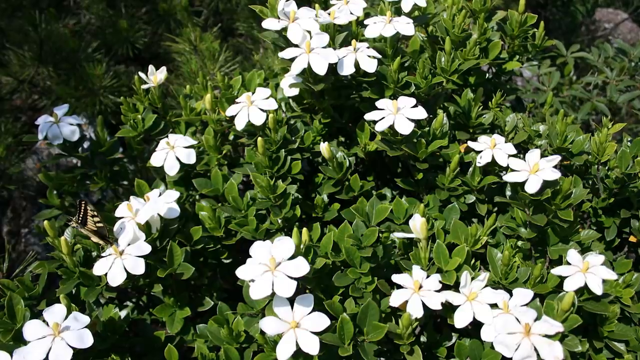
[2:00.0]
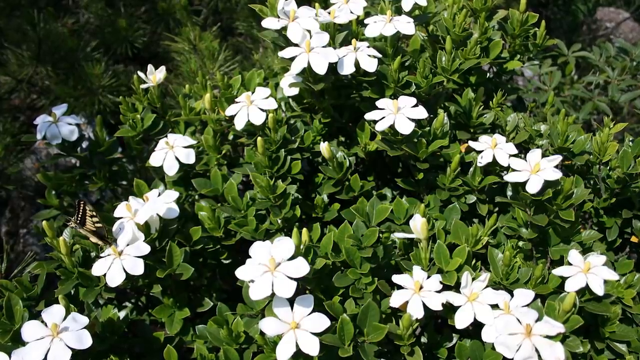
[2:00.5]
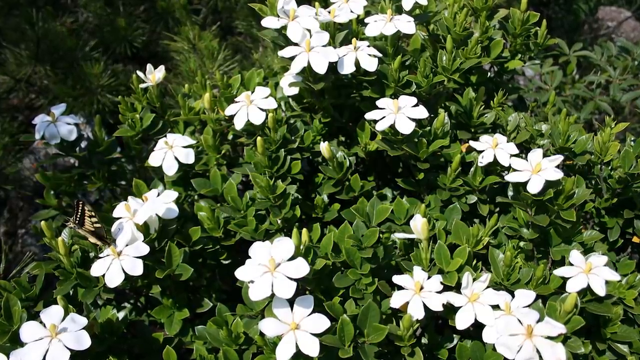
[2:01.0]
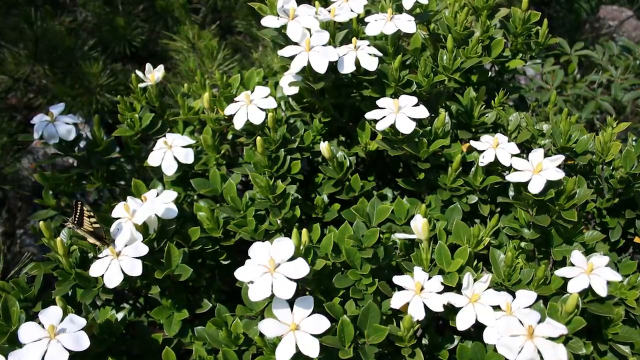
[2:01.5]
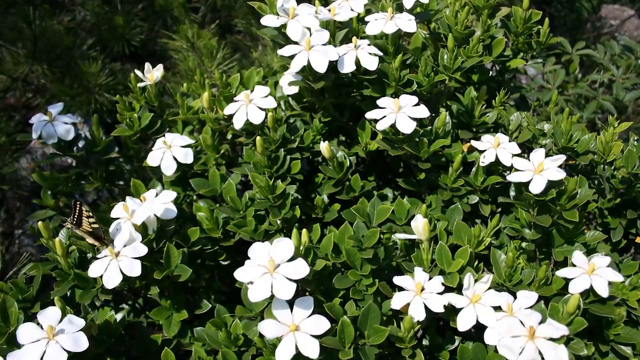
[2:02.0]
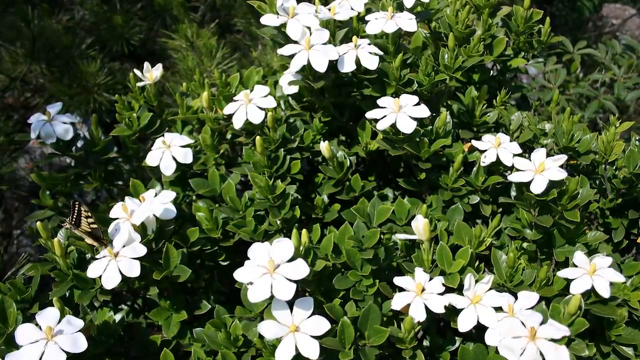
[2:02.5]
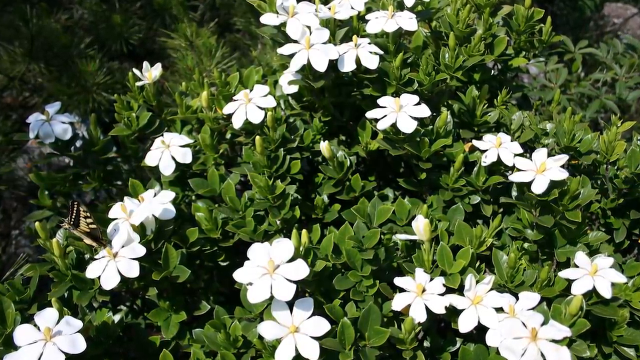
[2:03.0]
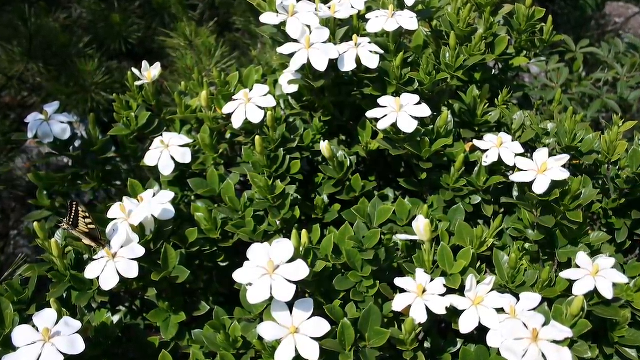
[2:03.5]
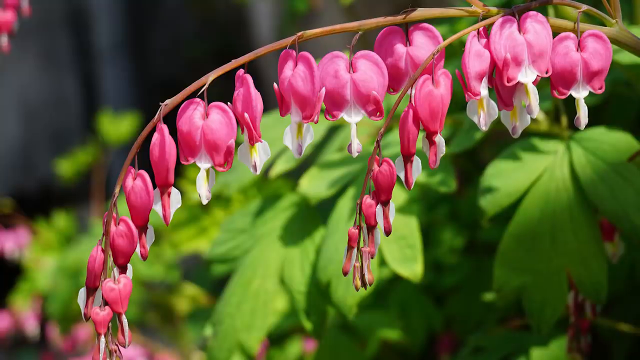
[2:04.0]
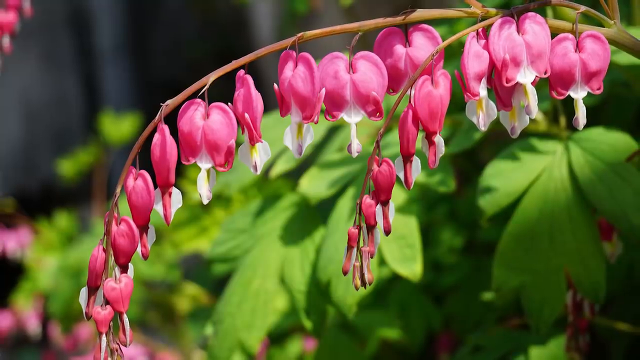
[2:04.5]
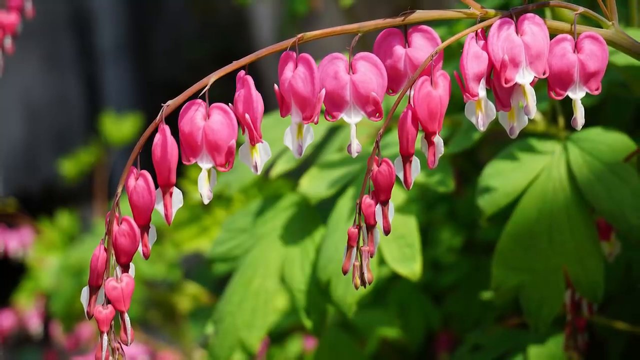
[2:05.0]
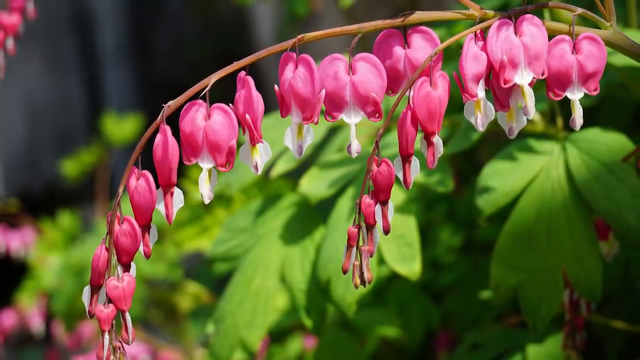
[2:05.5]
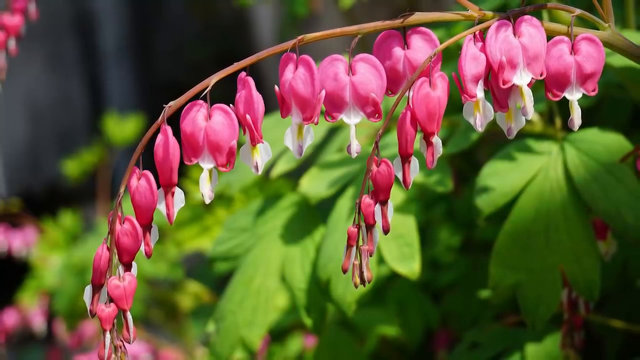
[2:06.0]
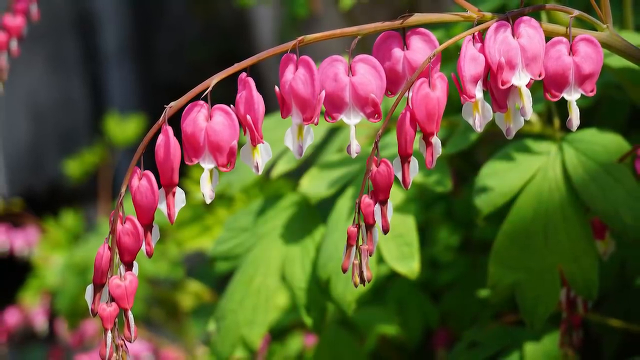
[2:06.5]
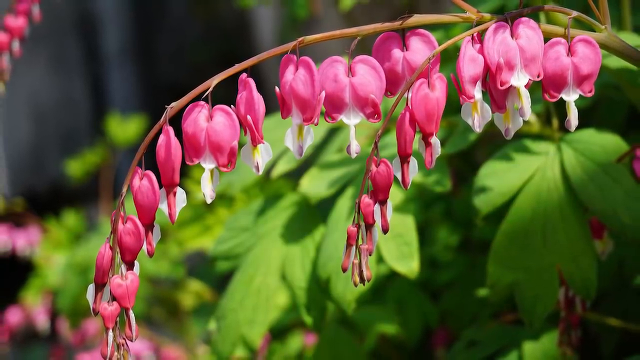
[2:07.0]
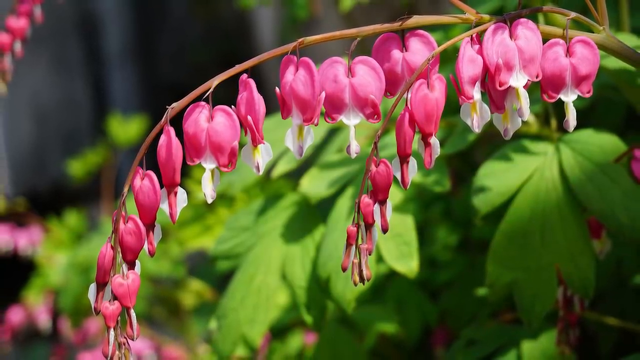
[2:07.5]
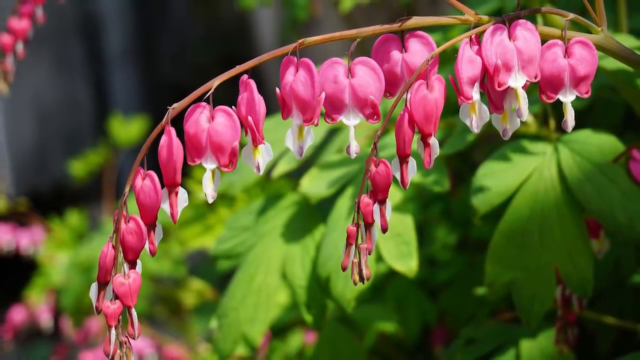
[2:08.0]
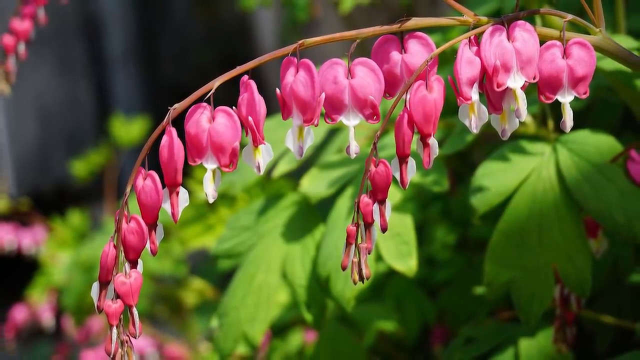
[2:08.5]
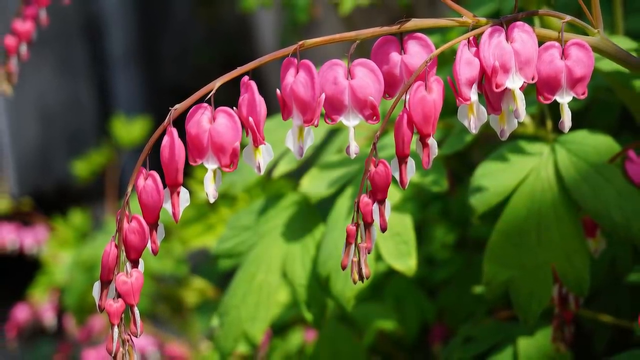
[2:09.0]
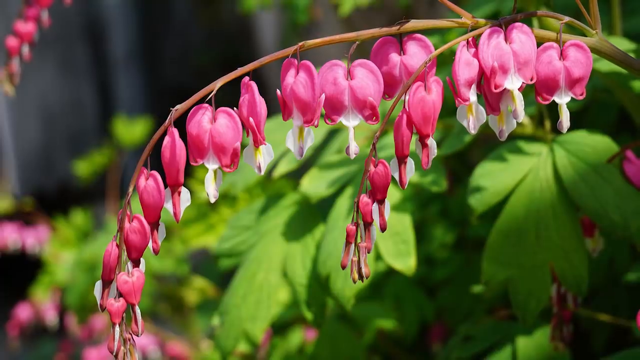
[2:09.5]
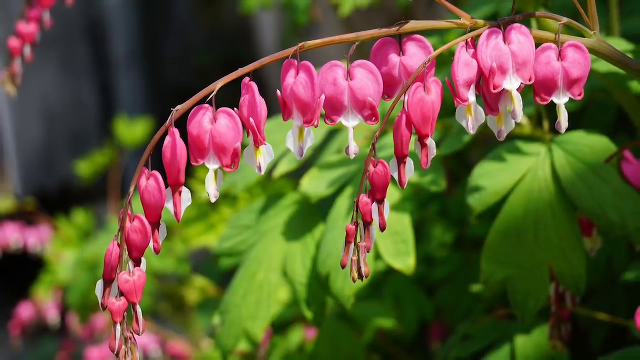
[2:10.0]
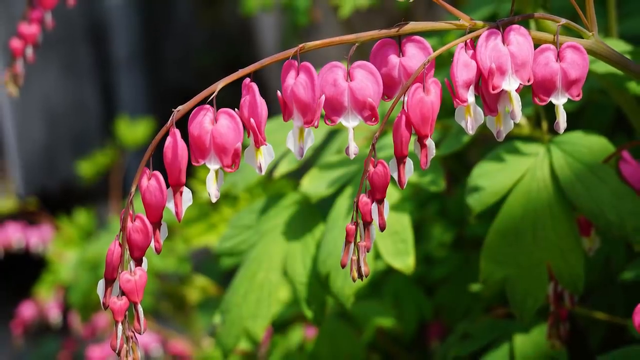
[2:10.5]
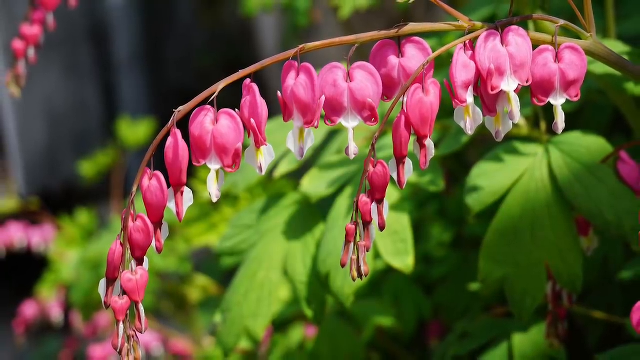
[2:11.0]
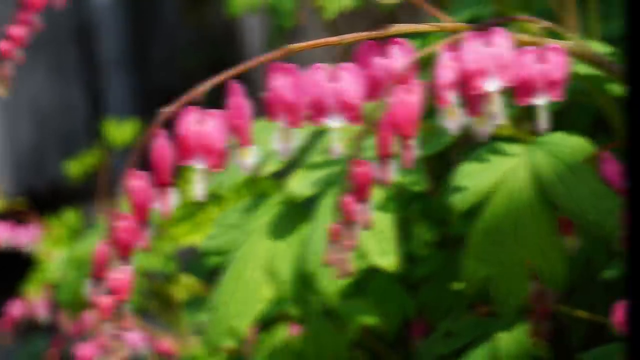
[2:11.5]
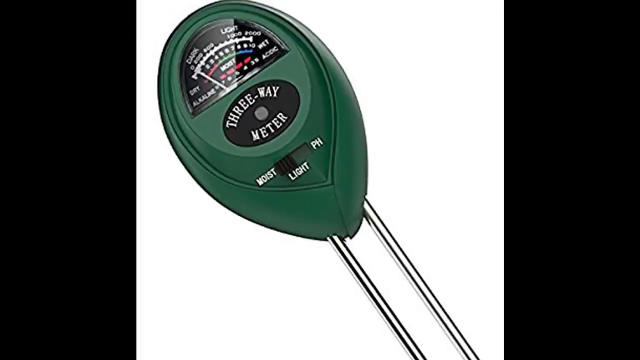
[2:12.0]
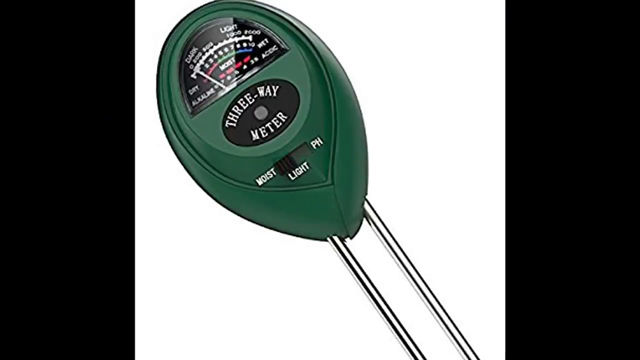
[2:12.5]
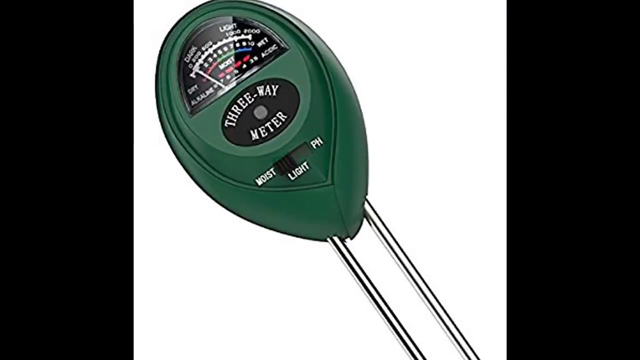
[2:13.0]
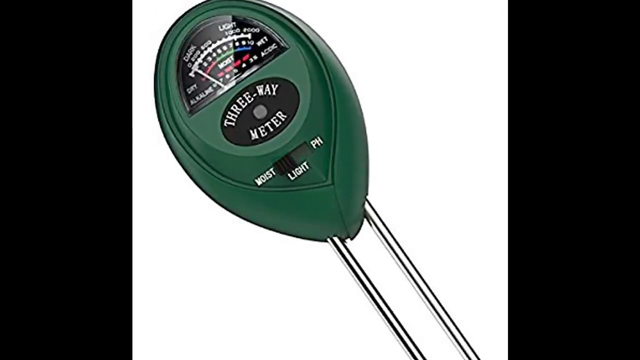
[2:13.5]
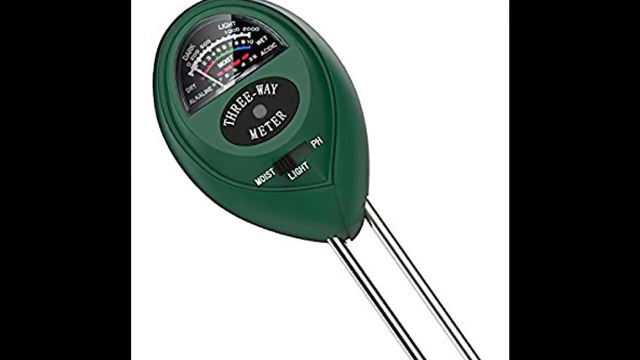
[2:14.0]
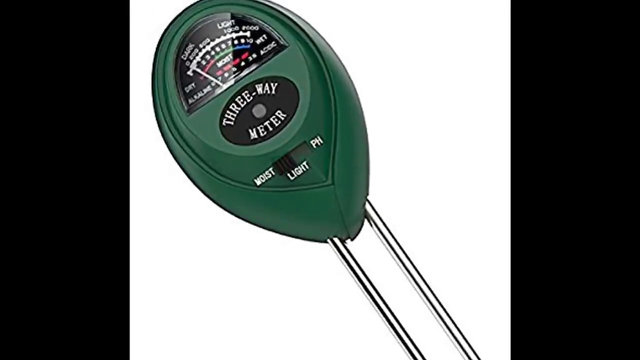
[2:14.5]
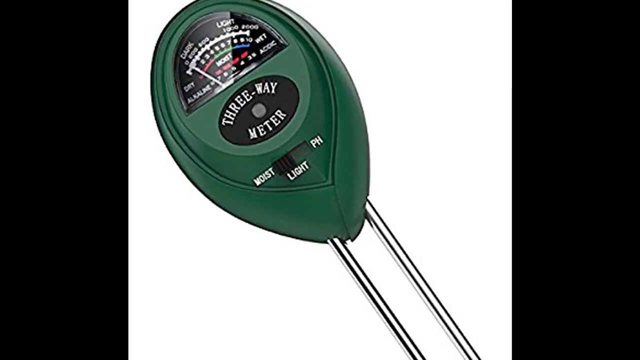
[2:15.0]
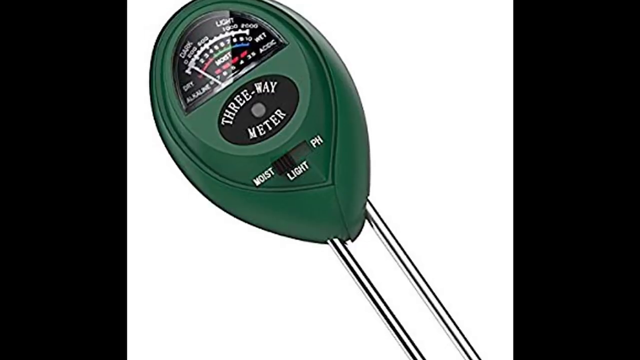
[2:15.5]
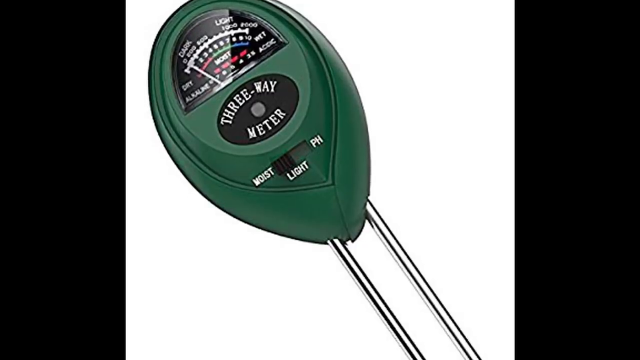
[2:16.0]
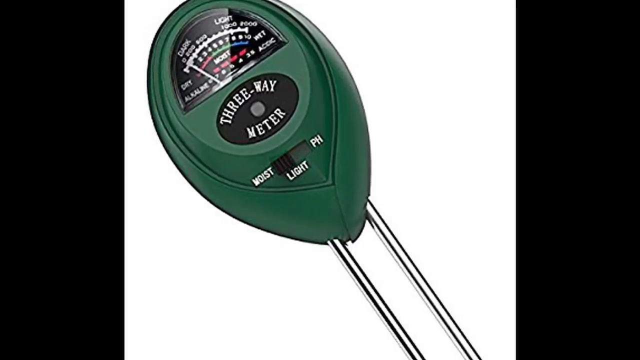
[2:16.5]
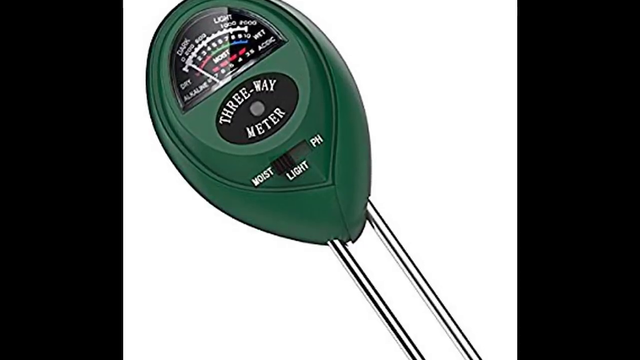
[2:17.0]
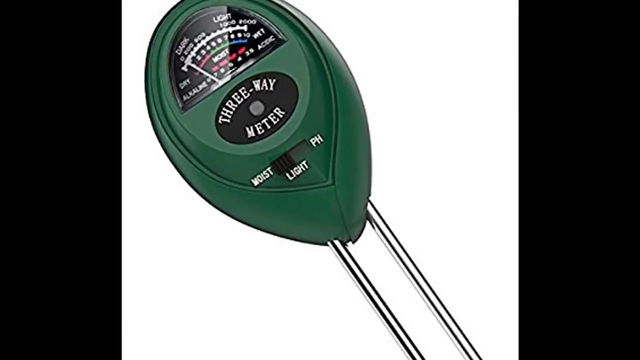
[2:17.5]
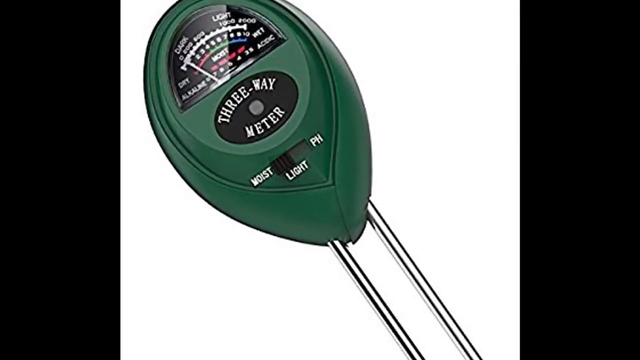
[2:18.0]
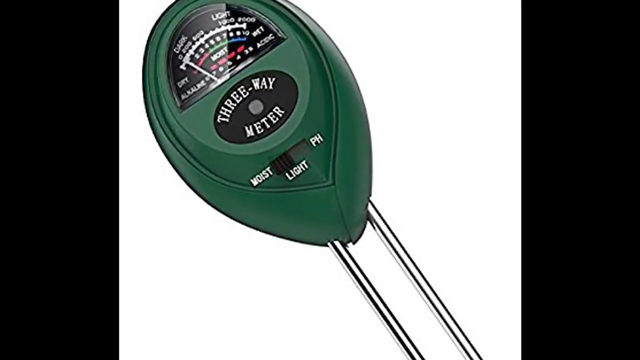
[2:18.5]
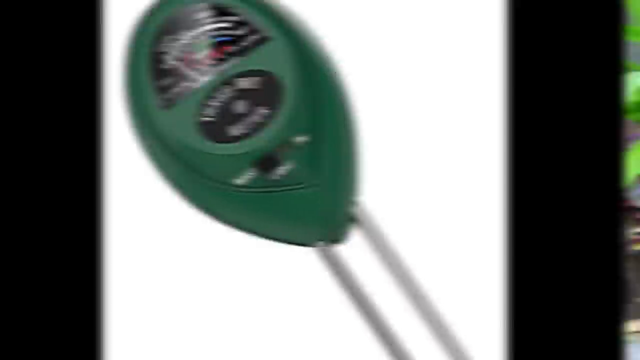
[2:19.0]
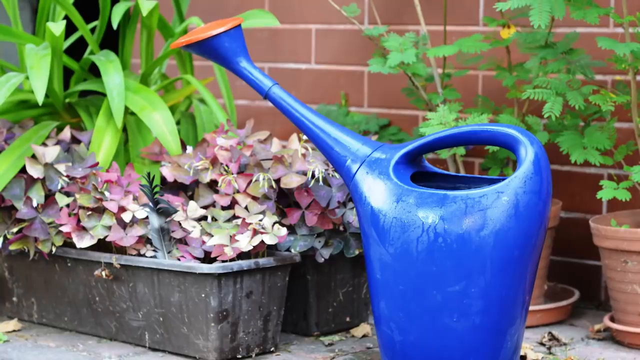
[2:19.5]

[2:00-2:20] The six-petaled white flowers are shown among the green bushes. The shot cuts to a plant with many pink petals sagging down from its branches, with a green plant with large green petals behind it. Next is a green device labeled "three-way meter," with a meter at the top, "moist, light, pH" written below it, and two silver rods at the bottom. The shot then cuts to a large blue water vessel for watering plants. Near it are numerous plants, two green and two dark red, which look to be alive and thriving.